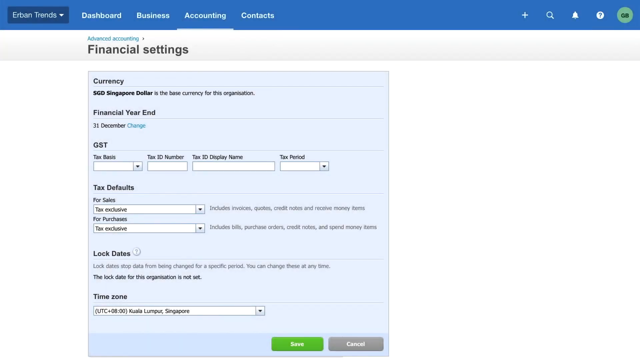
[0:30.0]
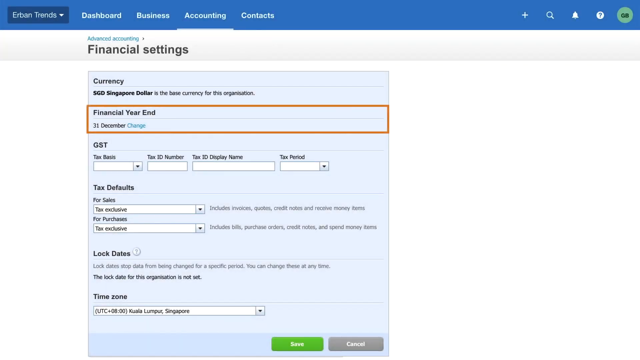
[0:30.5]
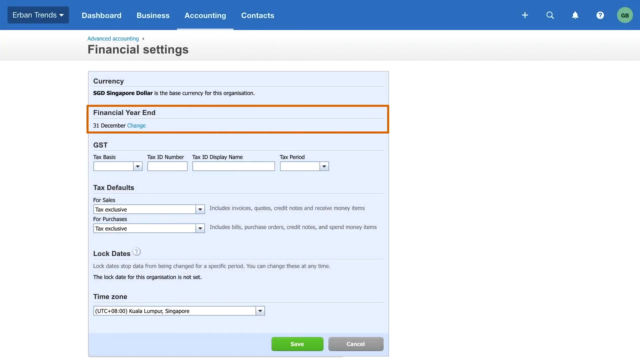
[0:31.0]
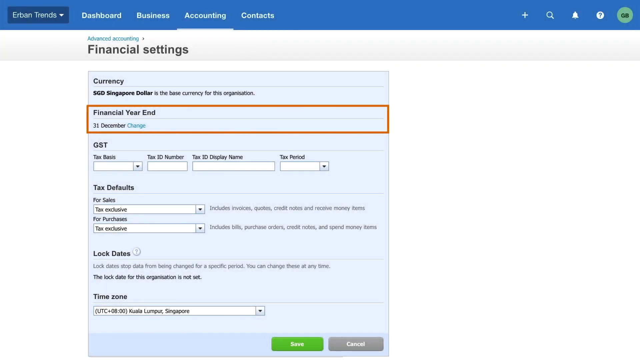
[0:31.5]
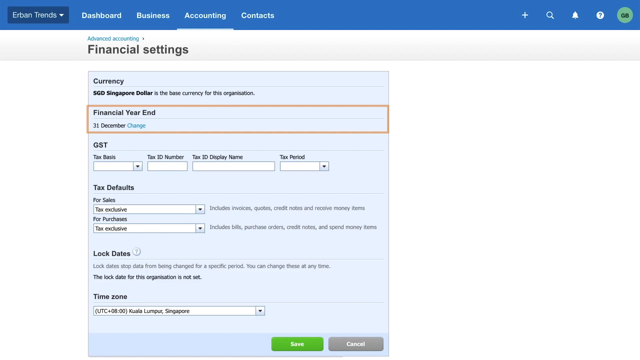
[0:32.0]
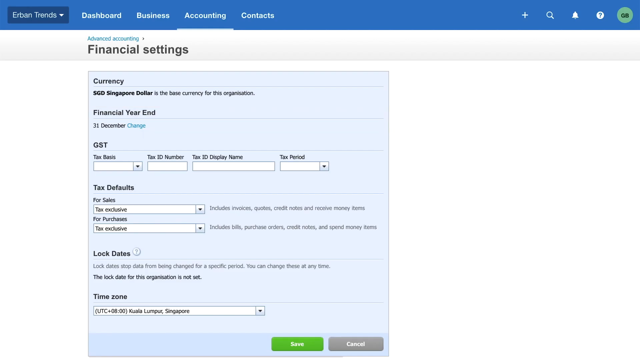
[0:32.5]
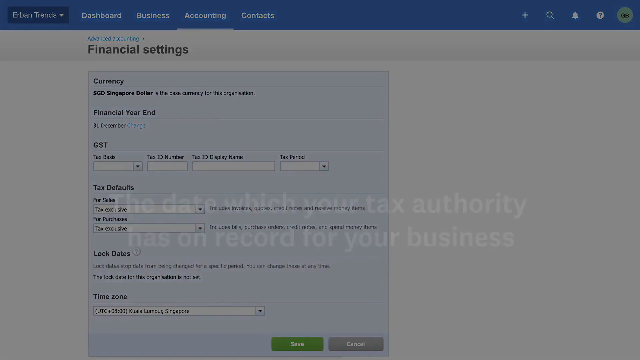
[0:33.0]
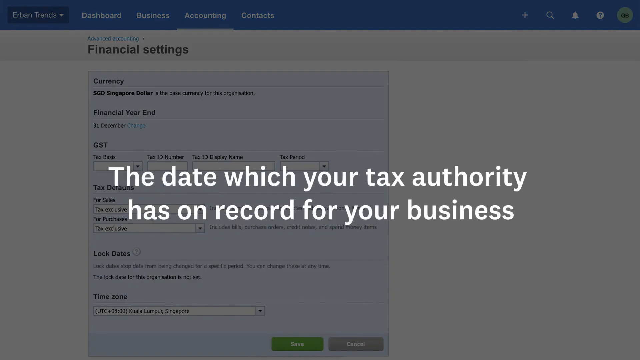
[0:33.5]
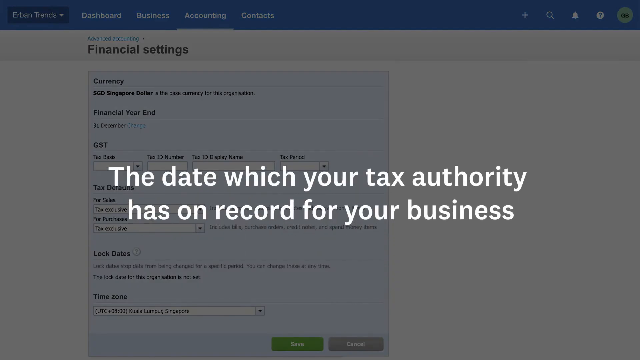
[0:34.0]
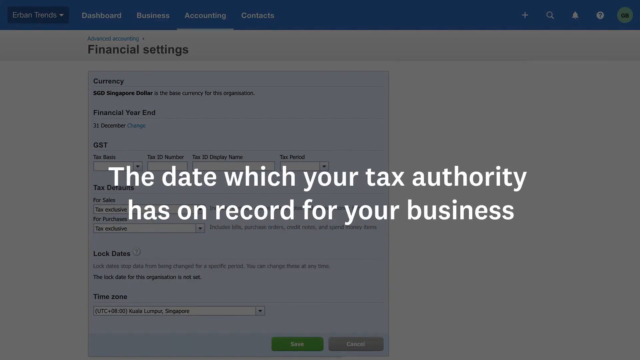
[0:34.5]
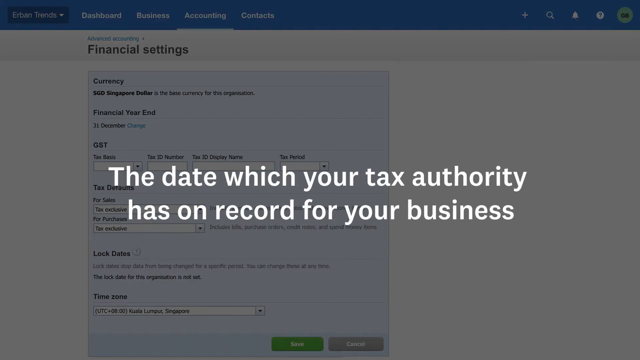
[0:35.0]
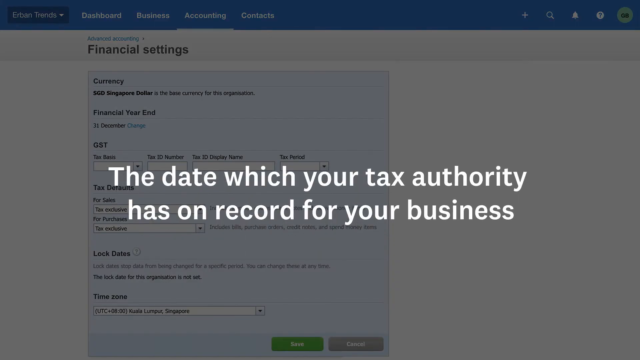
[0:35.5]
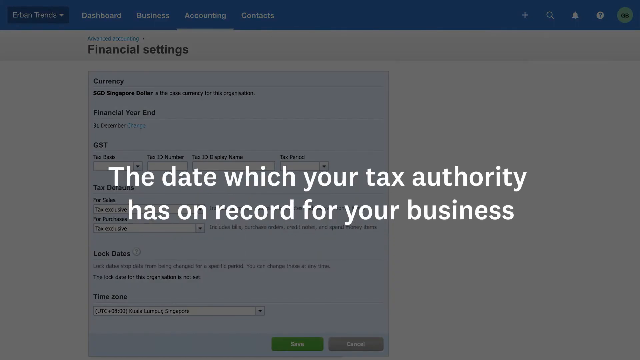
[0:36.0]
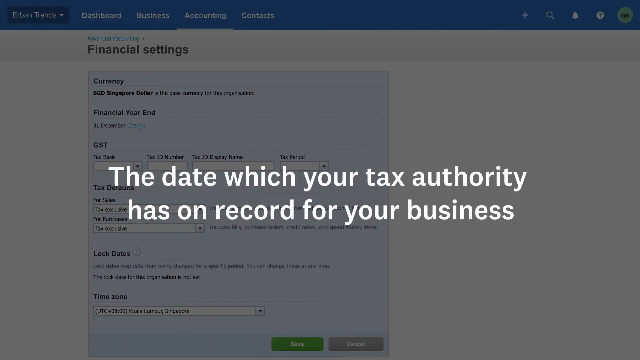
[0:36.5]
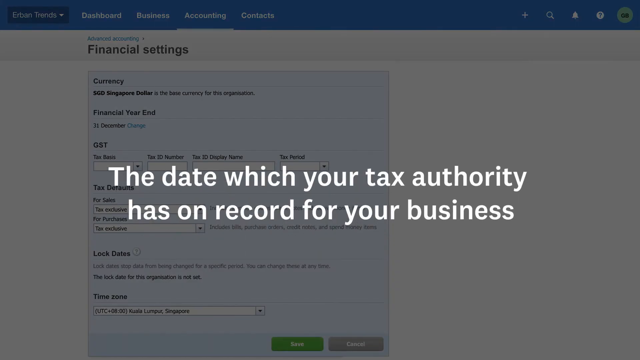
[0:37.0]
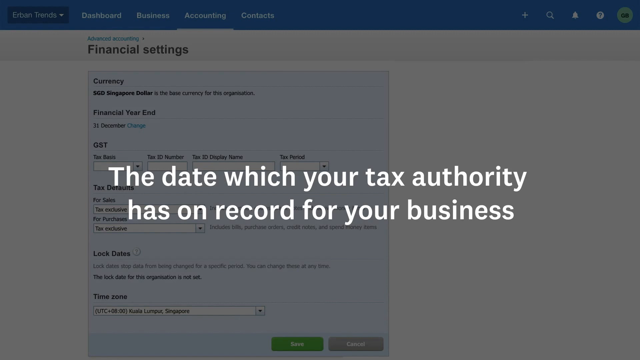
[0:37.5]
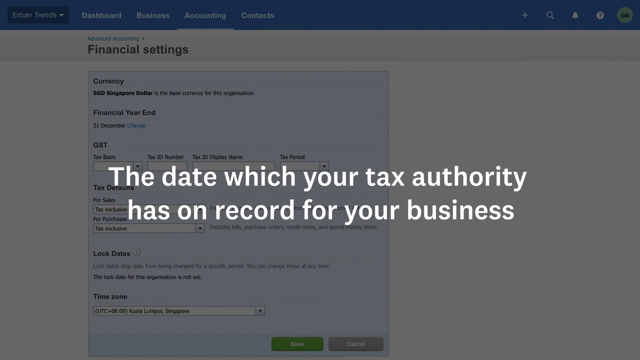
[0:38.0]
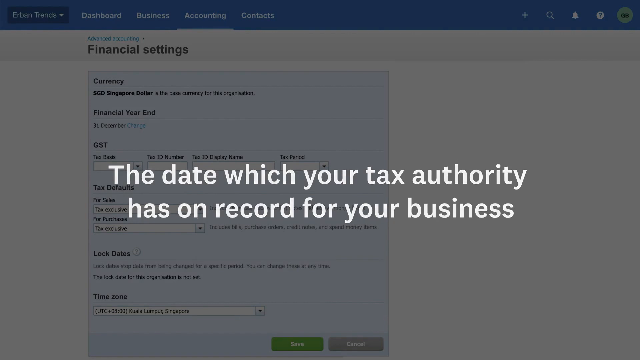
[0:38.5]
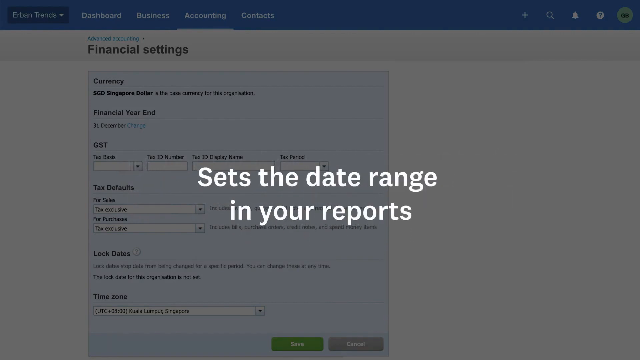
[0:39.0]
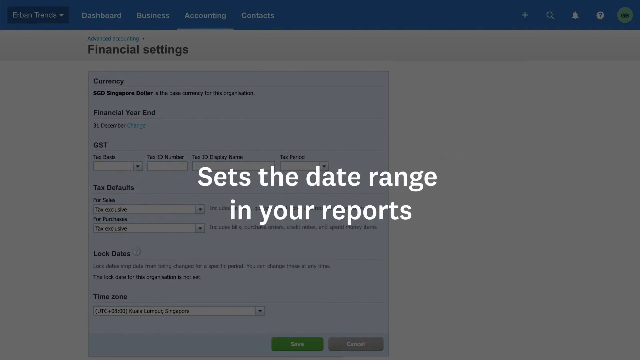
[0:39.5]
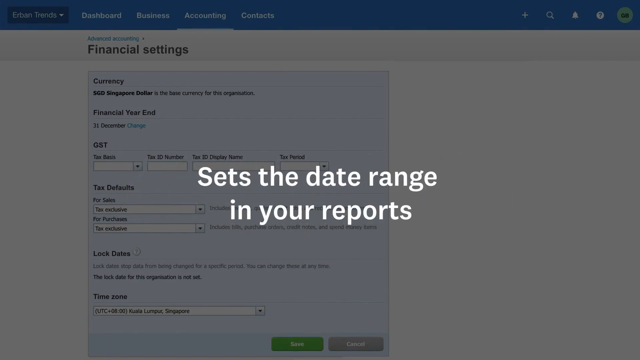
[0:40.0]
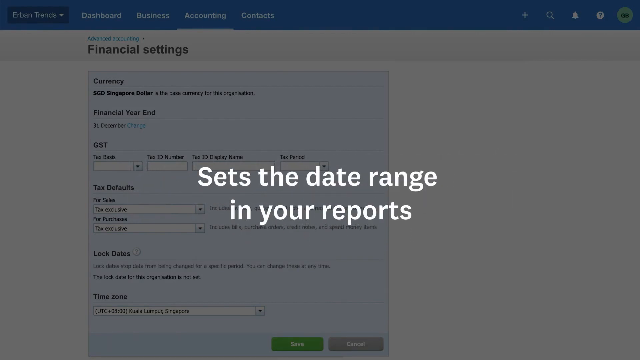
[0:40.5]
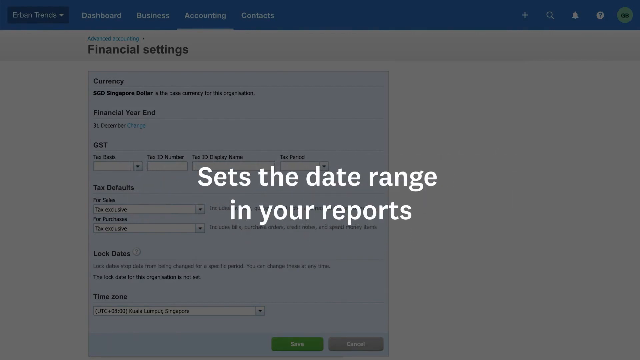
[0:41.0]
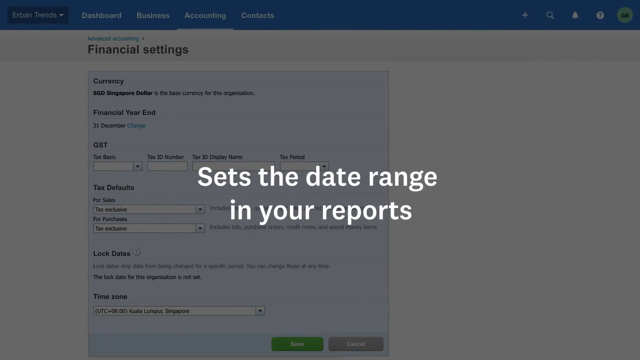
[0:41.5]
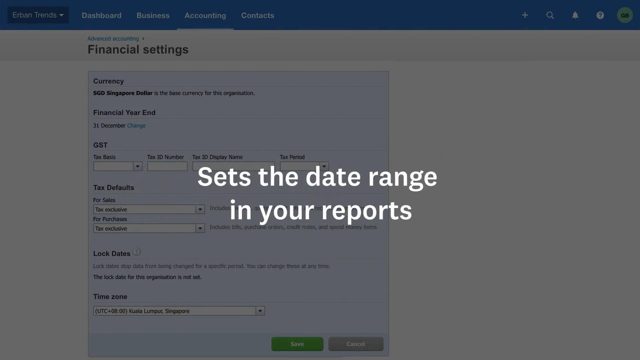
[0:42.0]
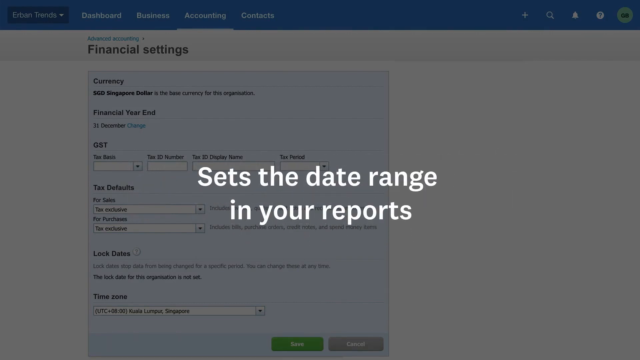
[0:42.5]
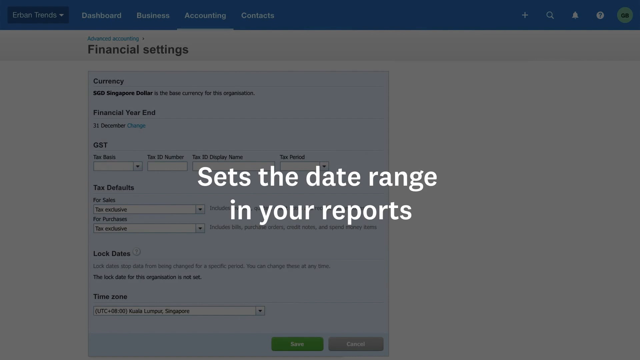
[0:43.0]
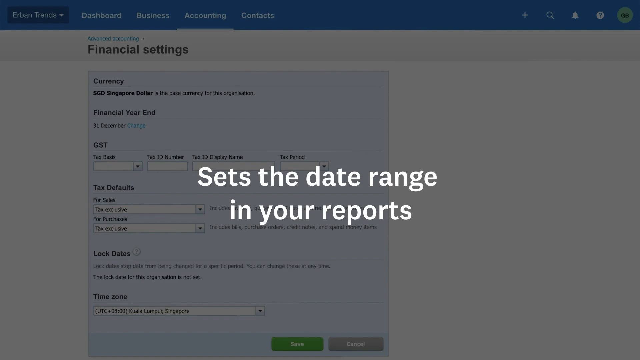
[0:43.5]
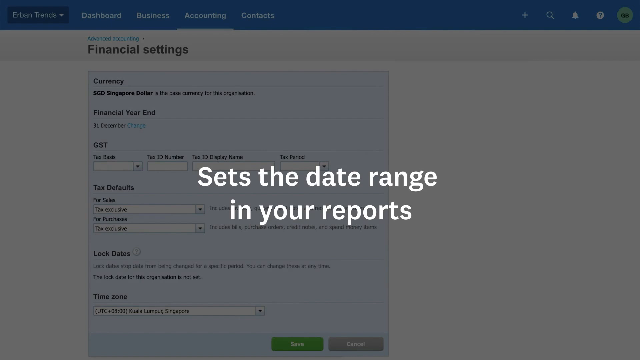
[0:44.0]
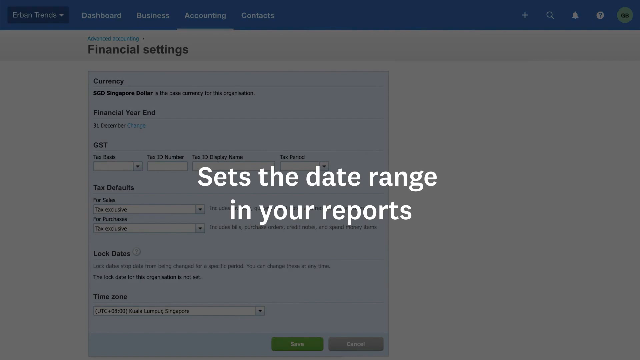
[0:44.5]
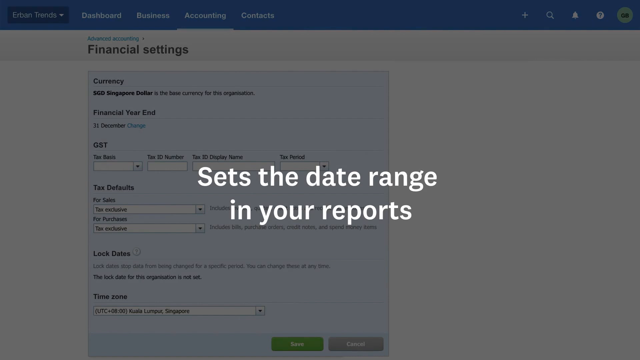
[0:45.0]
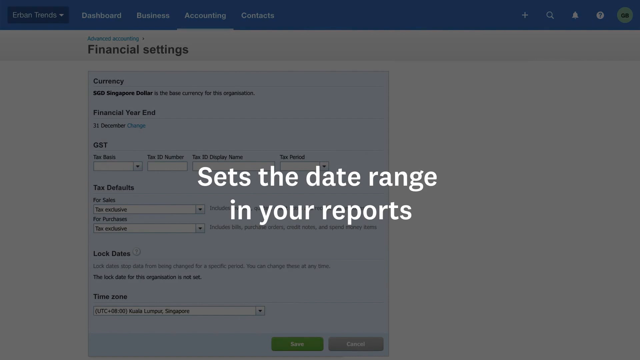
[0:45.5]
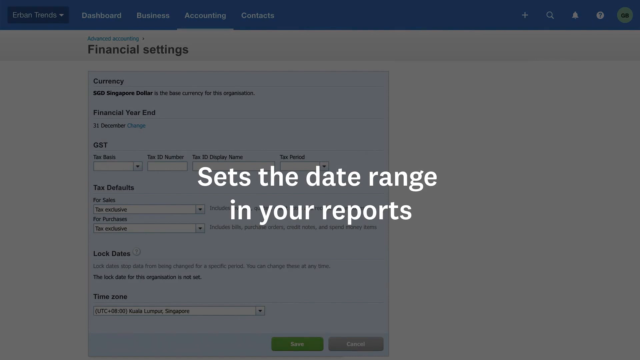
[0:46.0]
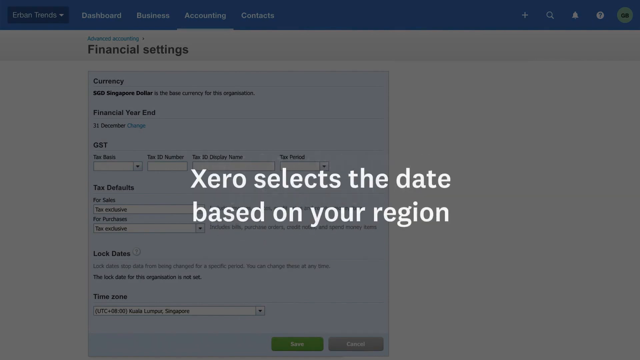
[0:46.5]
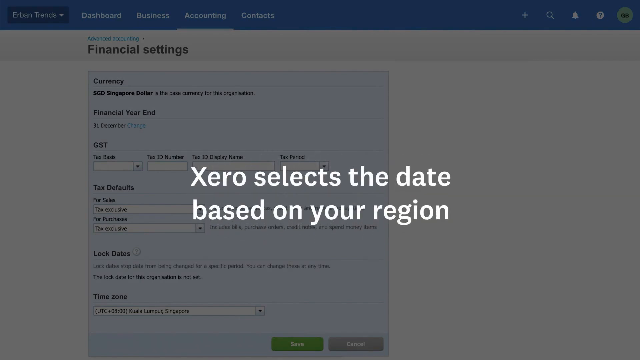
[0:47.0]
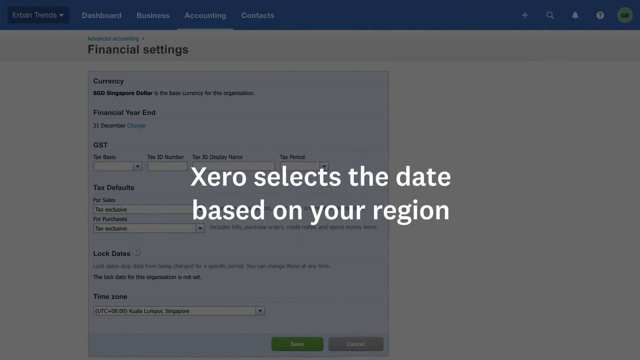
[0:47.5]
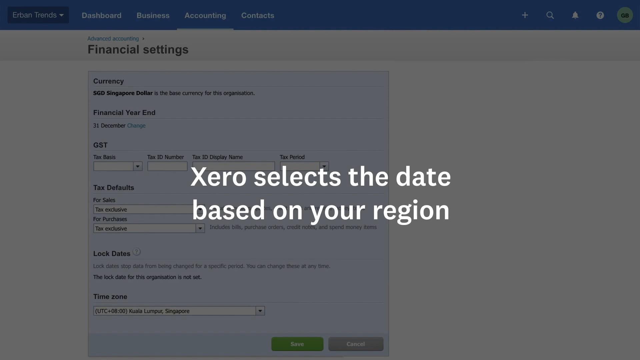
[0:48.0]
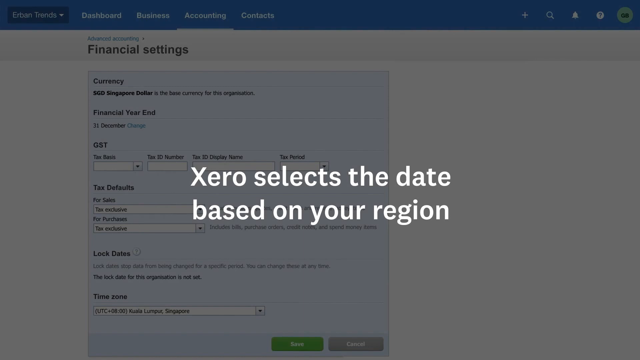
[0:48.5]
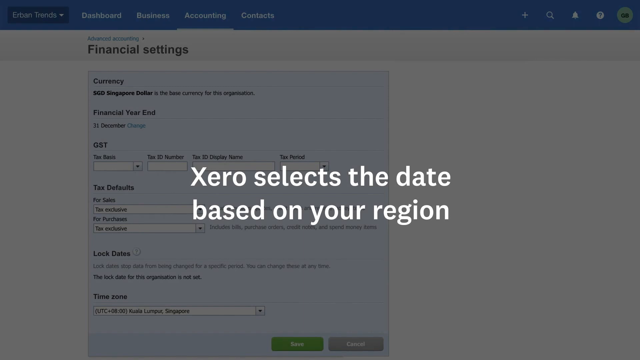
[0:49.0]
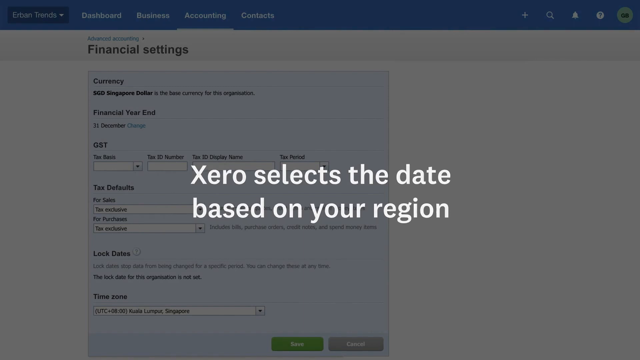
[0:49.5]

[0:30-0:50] An orange highlight appears around the fiscal year end field, "31 December" with "change." Another fade follows, with an overlay on top of the page. It reads "the date which your tax authority has on record for your business," apparently referring to the fiscal year end, and explains that the fiscal year end sets the date range in your reports, that "Xero selects the date based on your region," and "check your prior financial records."